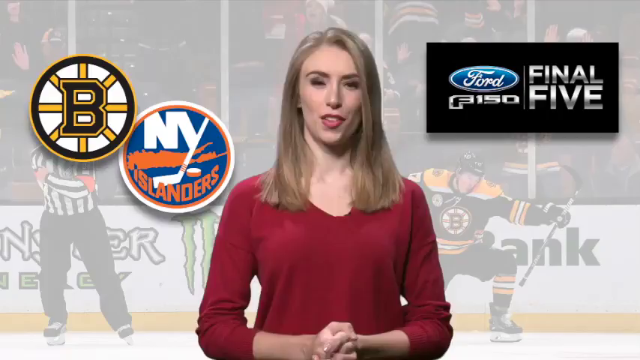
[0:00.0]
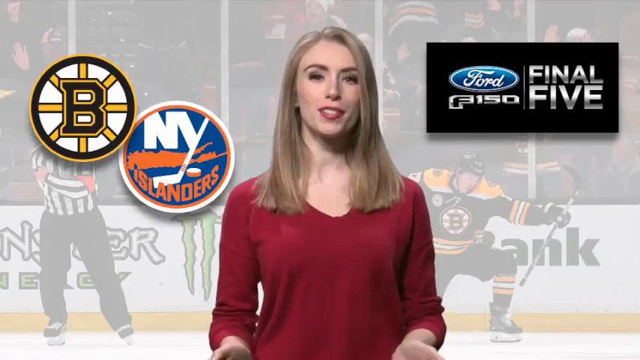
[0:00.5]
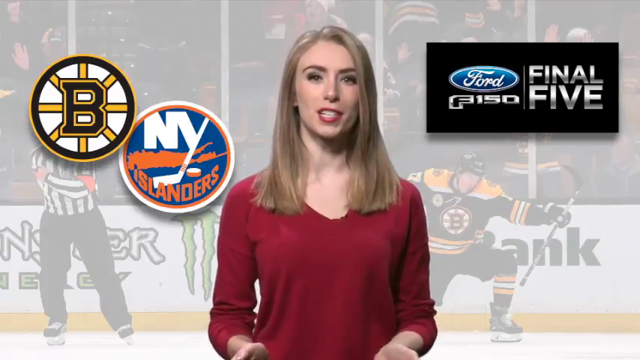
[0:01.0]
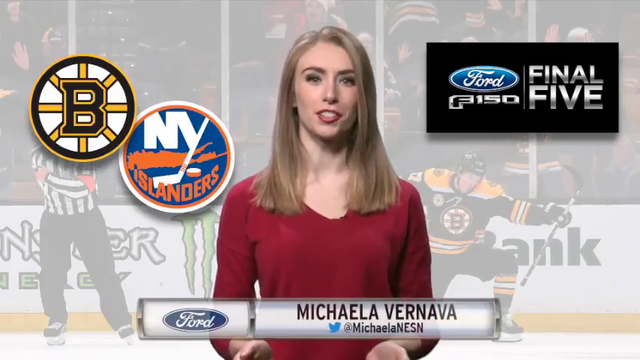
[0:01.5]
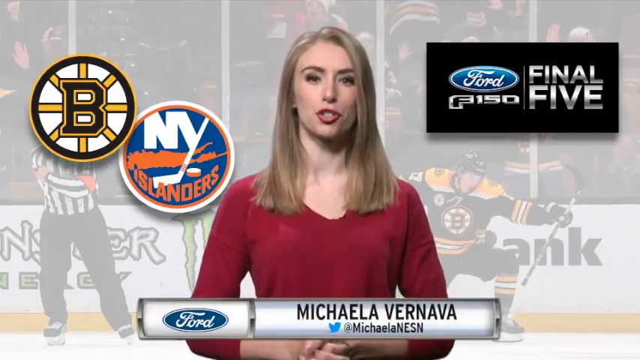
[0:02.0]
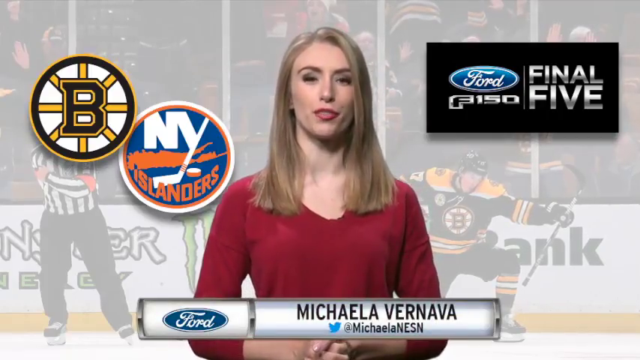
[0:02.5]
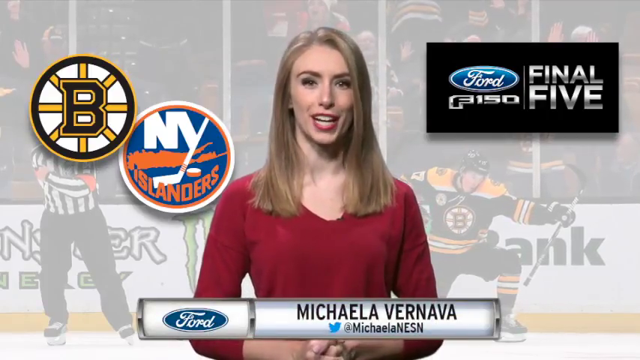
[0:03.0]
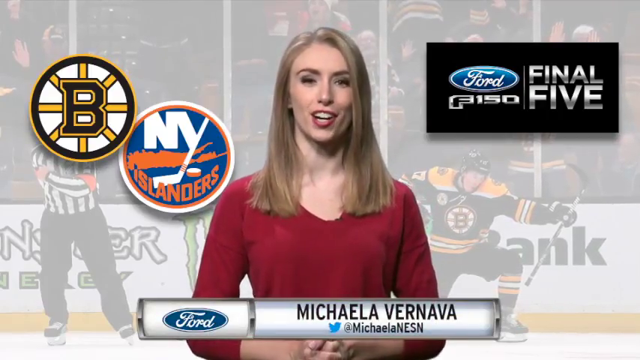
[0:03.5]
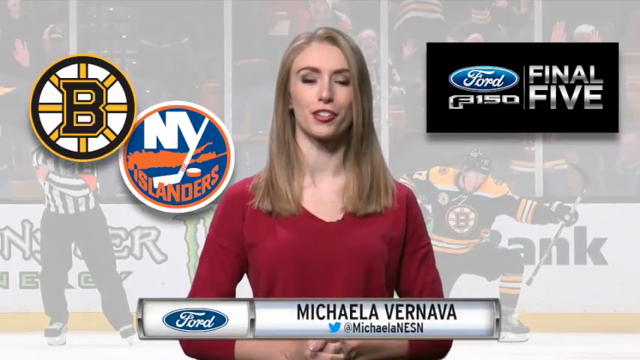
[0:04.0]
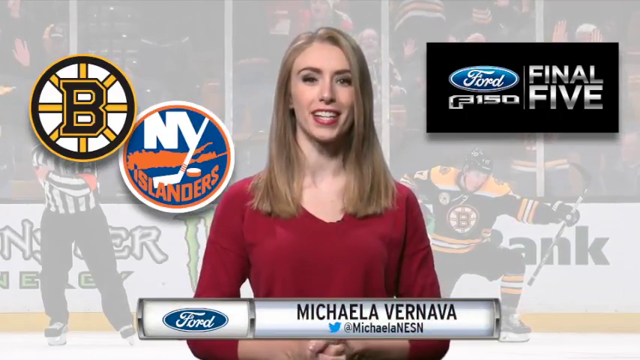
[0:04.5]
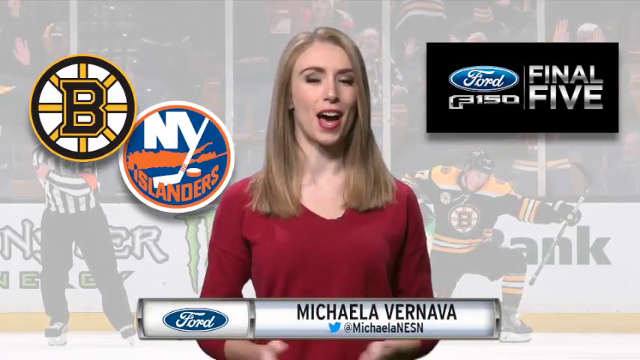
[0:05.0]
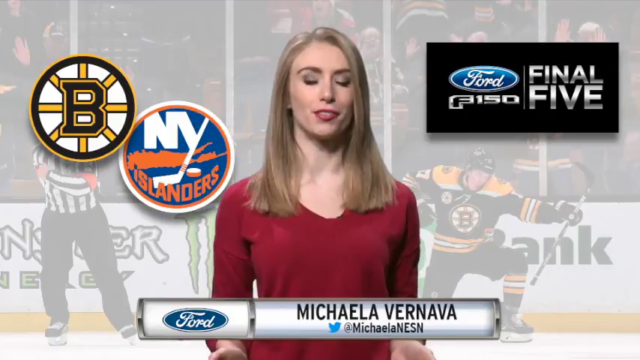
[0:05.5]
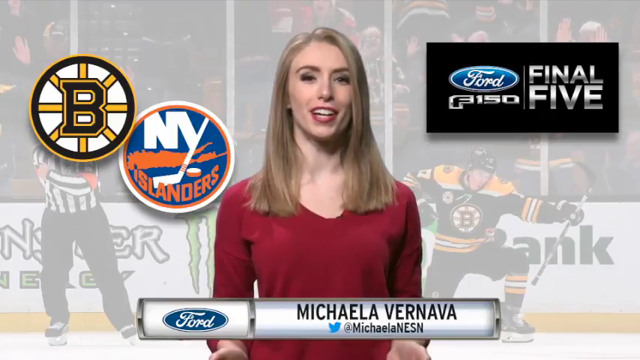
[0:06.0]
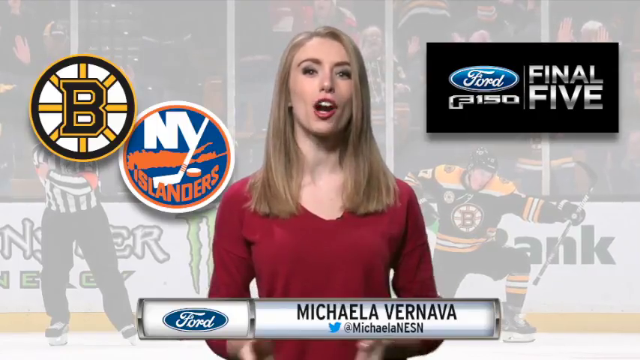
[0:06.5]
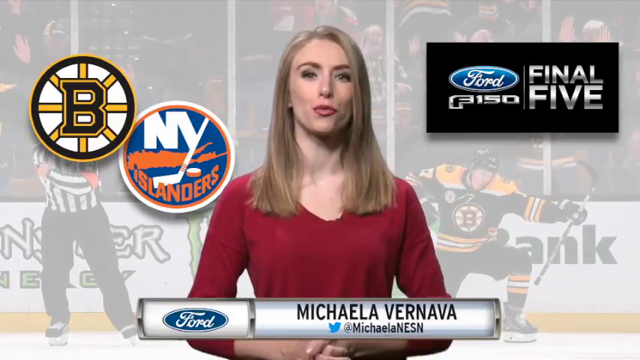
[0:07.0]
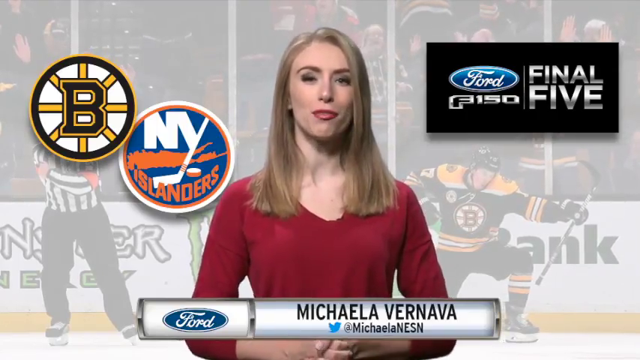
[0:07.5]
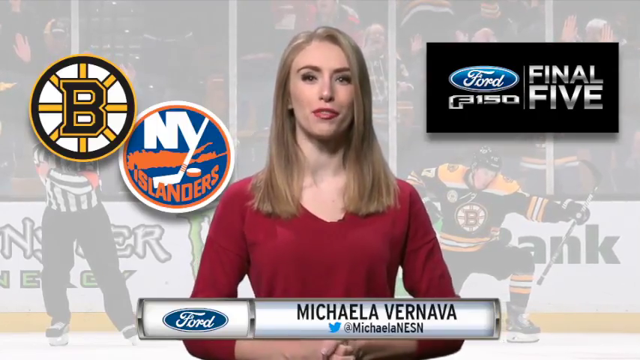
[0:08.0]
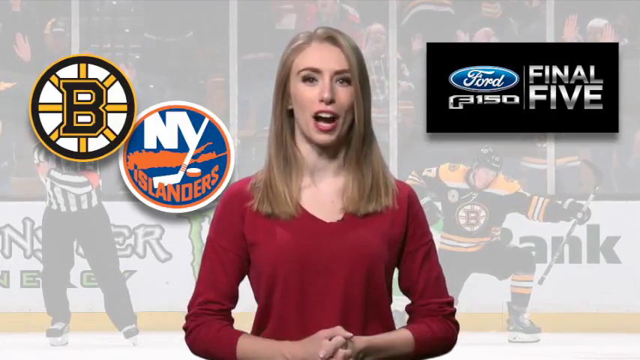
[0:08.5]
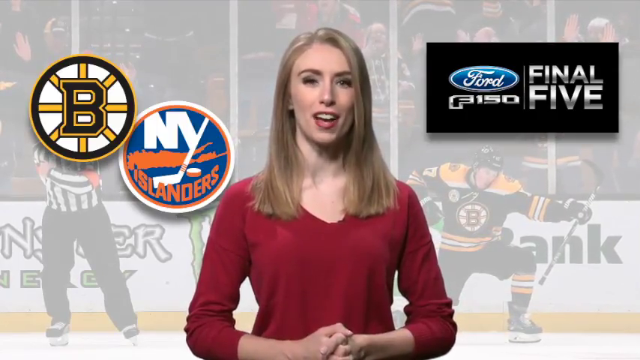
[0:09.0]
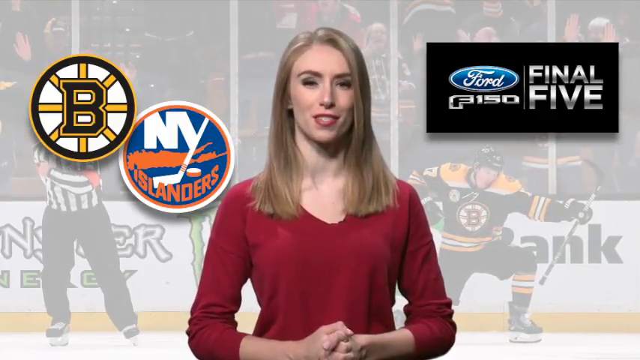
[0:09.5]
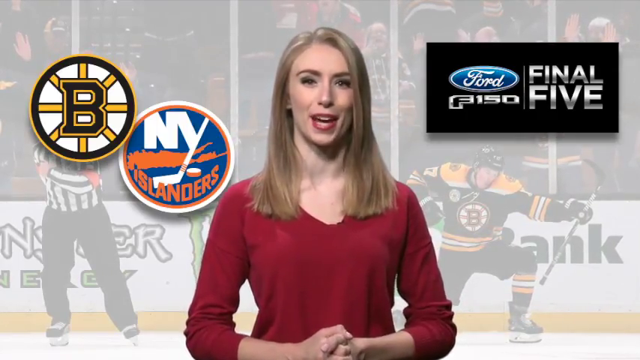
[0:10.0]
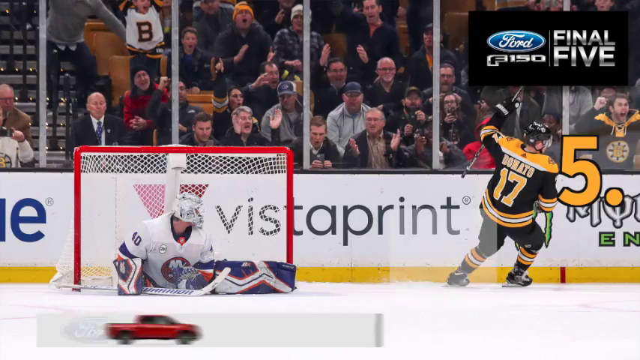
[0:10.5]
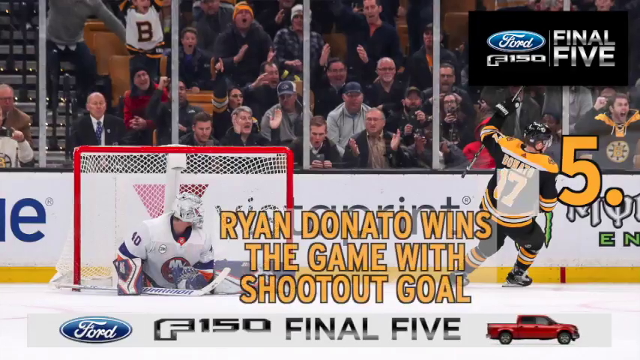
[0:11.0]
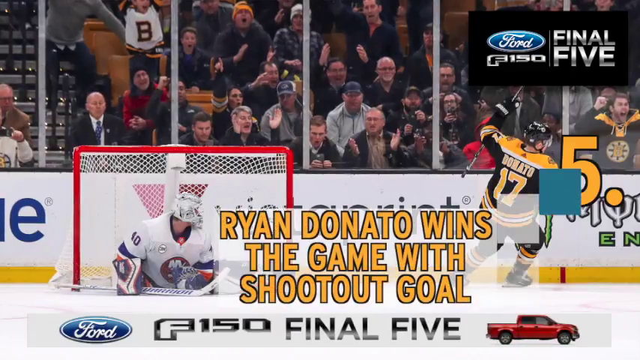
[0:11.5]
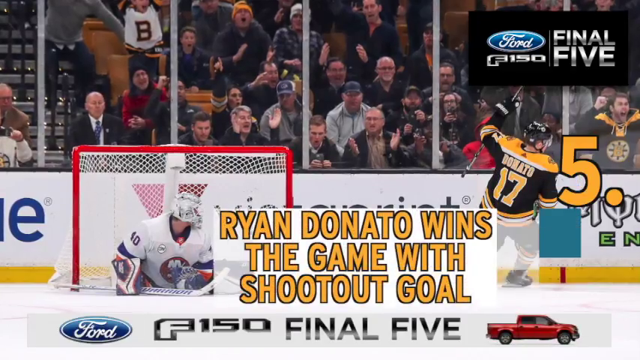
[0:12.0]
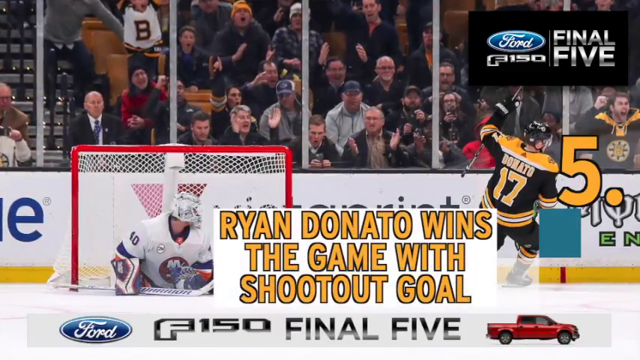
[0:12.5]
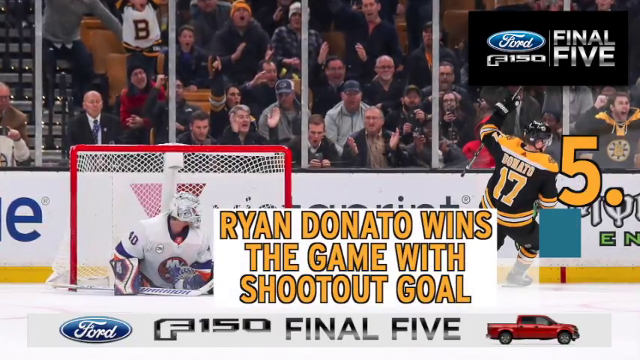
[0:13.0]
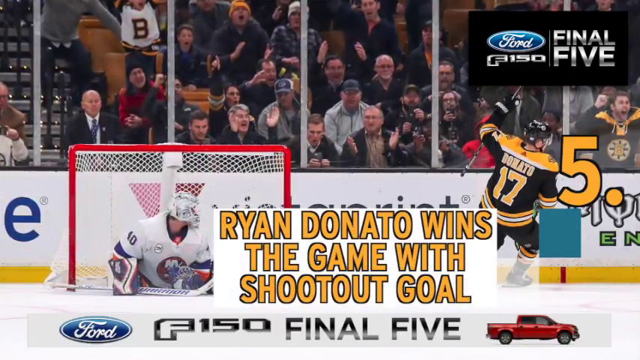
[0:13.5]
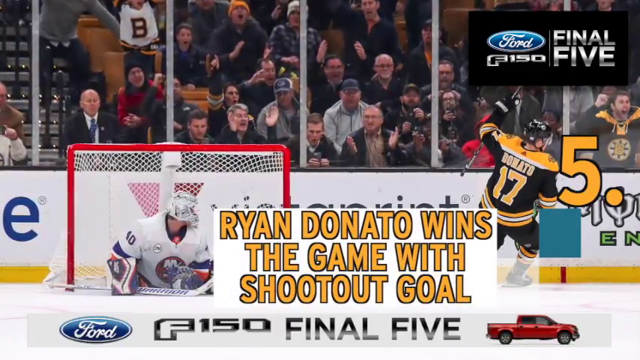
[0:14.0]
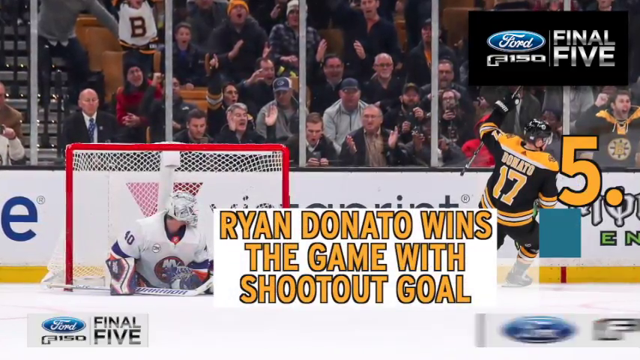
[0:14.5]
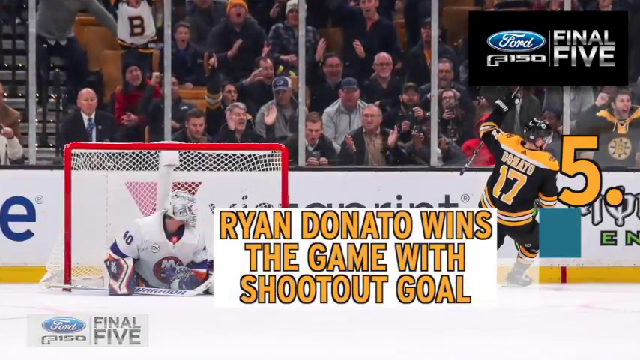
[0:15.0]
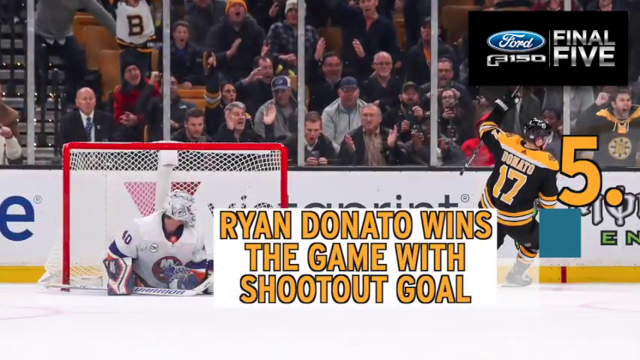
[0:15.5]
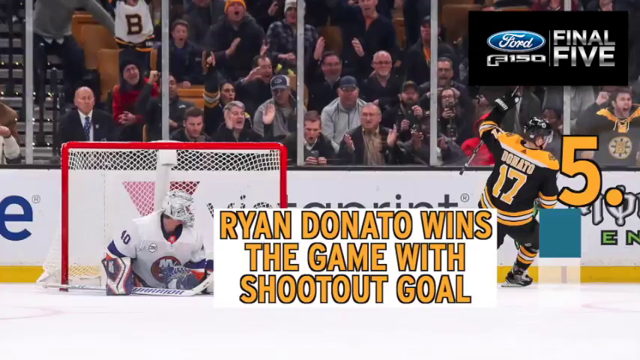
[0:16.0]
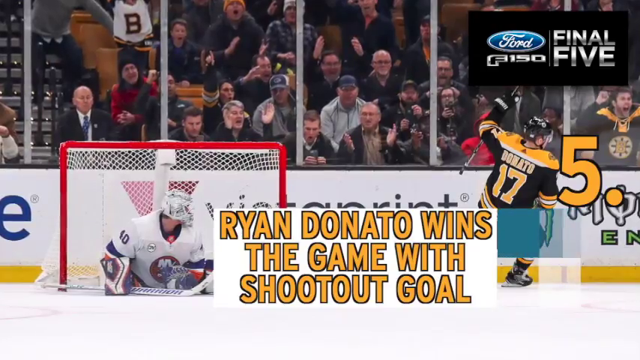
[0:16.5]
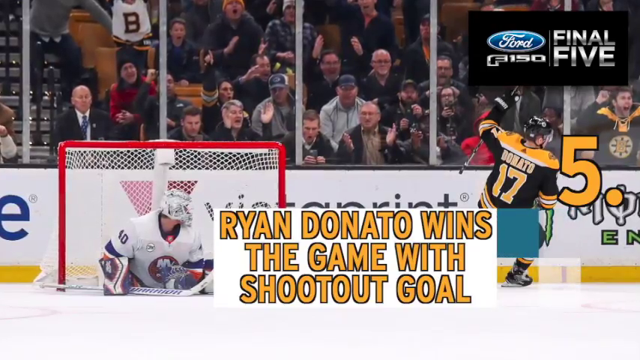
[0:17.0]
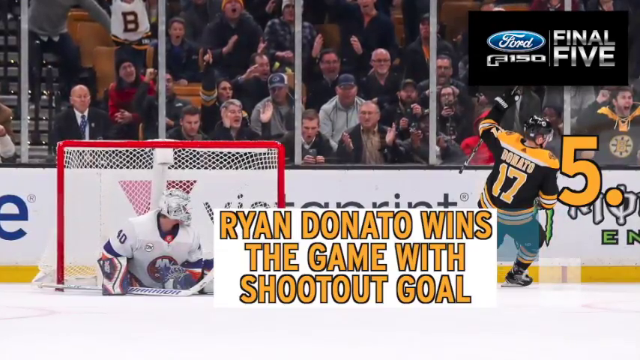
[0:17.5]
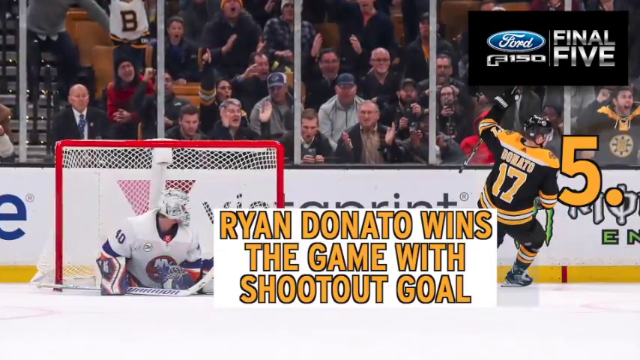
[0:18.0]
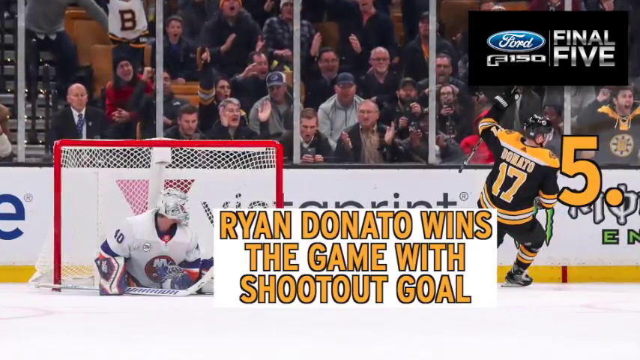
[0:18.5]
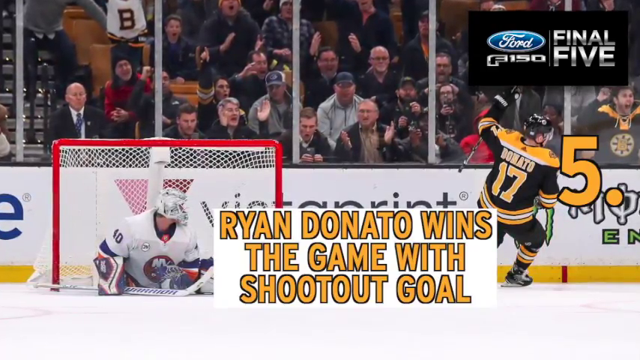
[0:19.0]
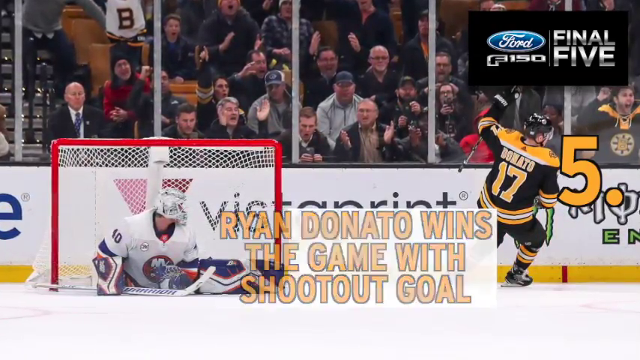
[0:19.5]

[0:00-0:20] What looks like a preview of a hockey matchup between the Bruins and the New York Islanders appears. There is a logo on the left, and on the right is "Ford F-150 Final 5" in a little box with a black background. In the middle is a blonde white woman with hair past her shoulders, wearing a red long-sleeved shirt. Behind her is a hockey rink with a ref and one of the Bruins players on it. Her name pops up at the bottom, "Michelle Ranava," with the Ford logo to the left. She talks to the screen, apparently about the game that just happened or the one coming up. Then a picture of the game appears, with yellow text at the bottom reading "Ryan Donato wins the game with a shootout goal." Donato is on the ice and the Islanders goalie is in the net. A number 5 is also shown on the left or the right.